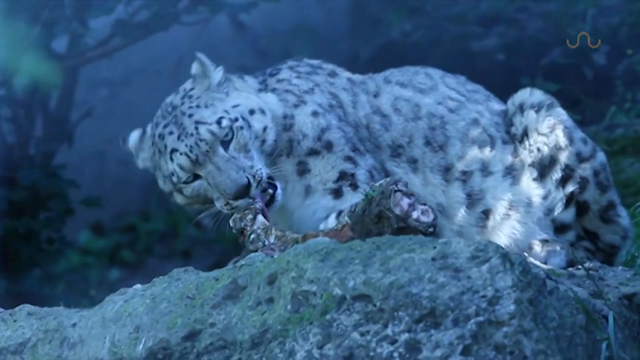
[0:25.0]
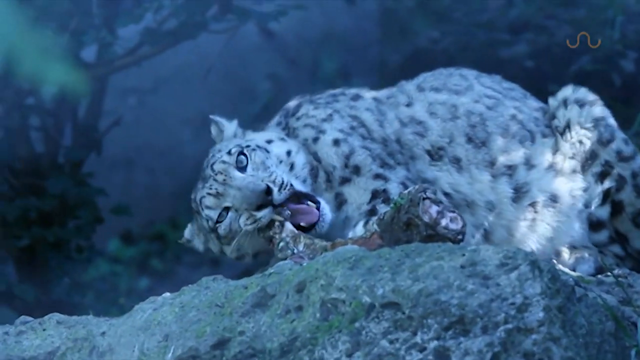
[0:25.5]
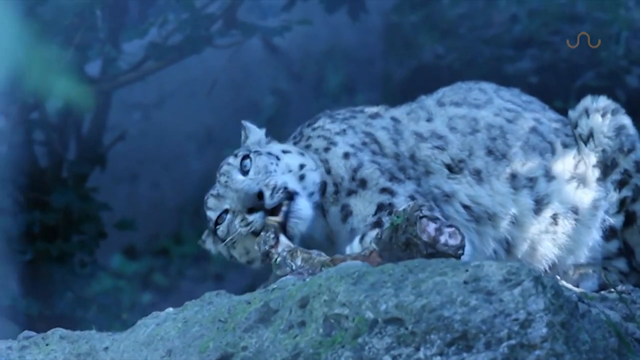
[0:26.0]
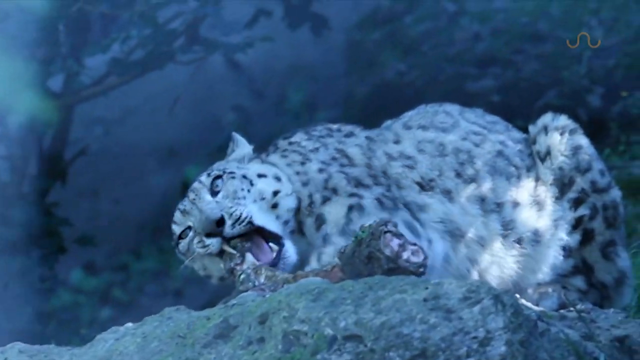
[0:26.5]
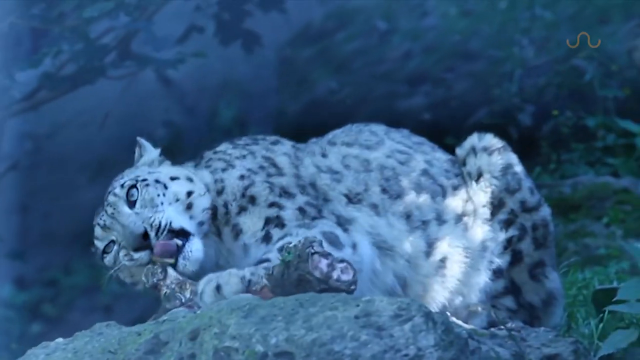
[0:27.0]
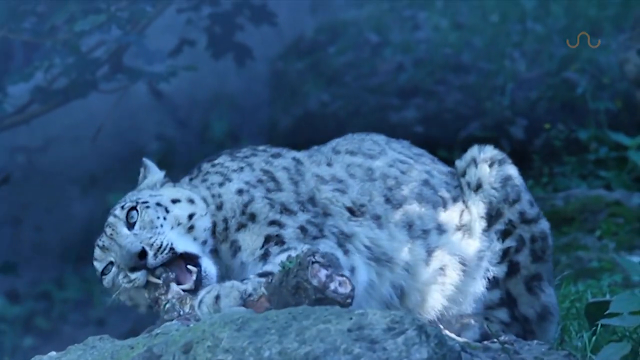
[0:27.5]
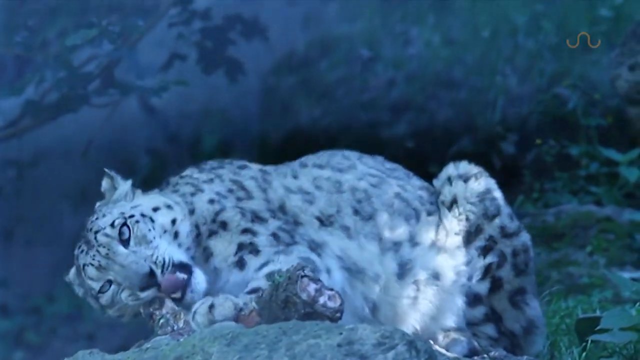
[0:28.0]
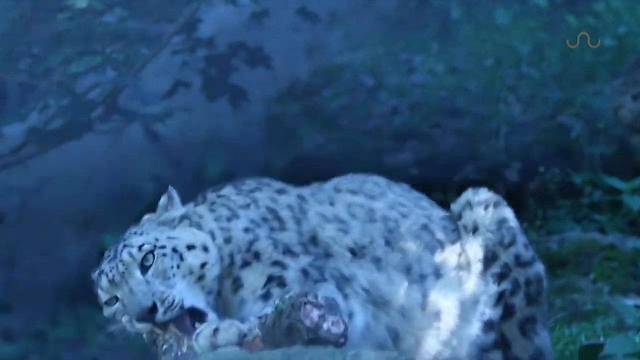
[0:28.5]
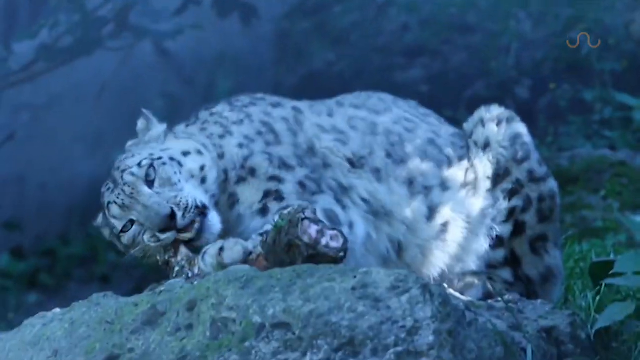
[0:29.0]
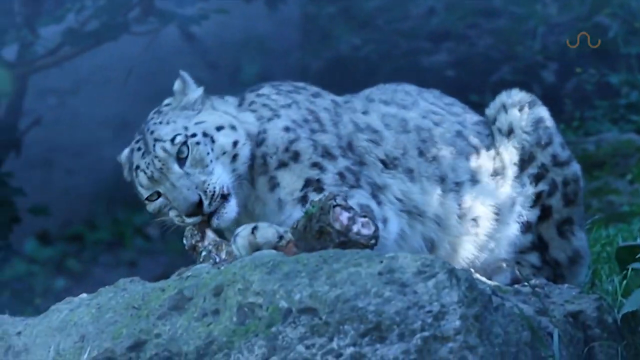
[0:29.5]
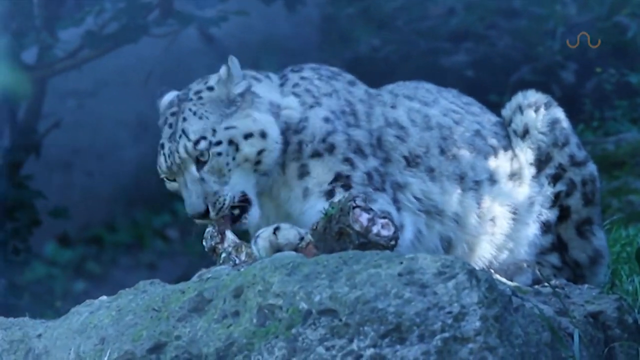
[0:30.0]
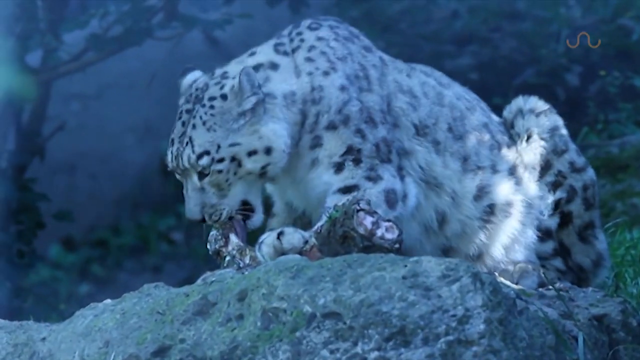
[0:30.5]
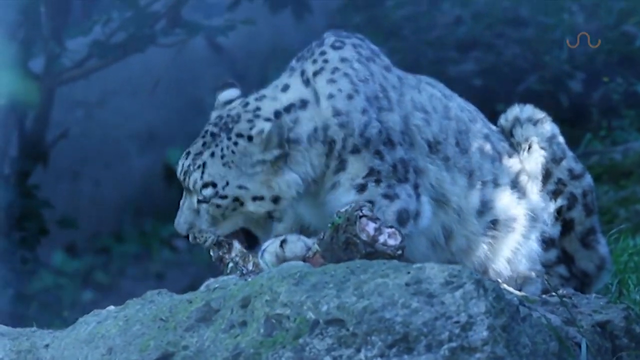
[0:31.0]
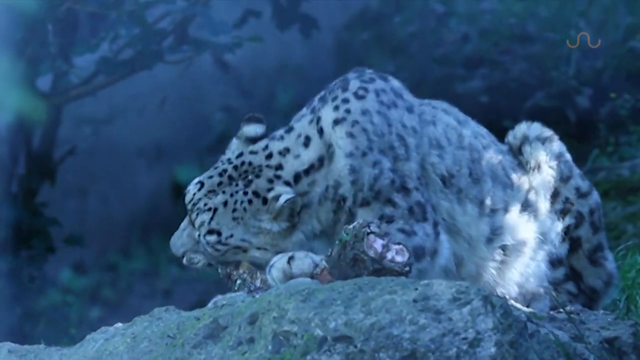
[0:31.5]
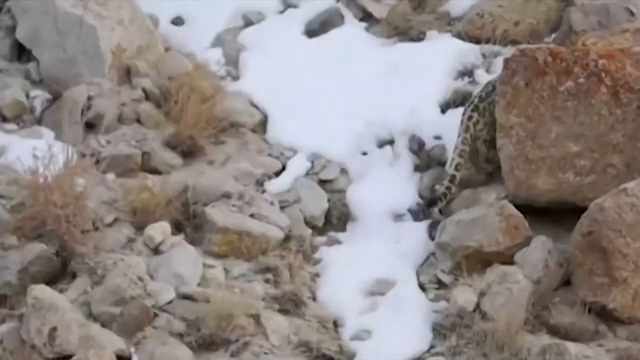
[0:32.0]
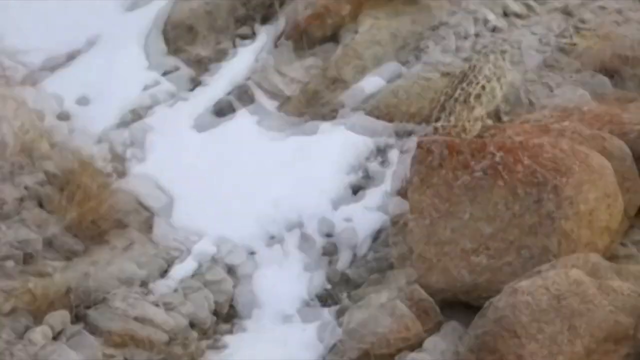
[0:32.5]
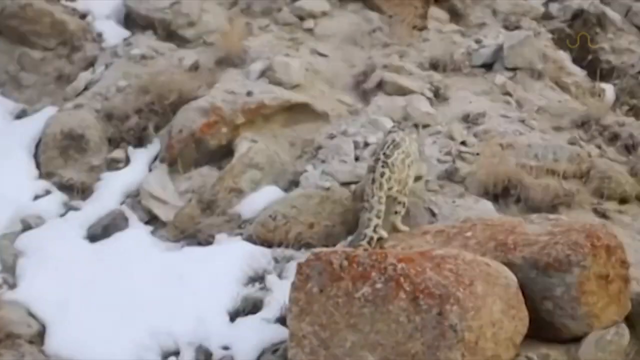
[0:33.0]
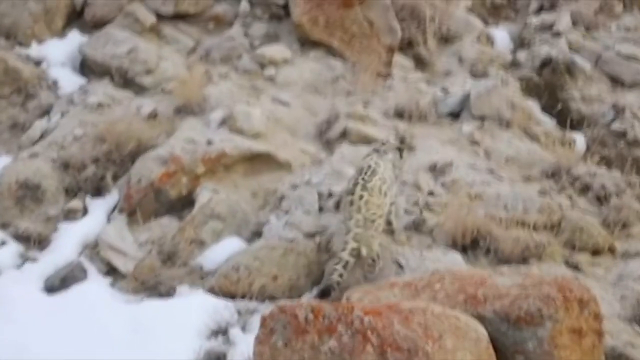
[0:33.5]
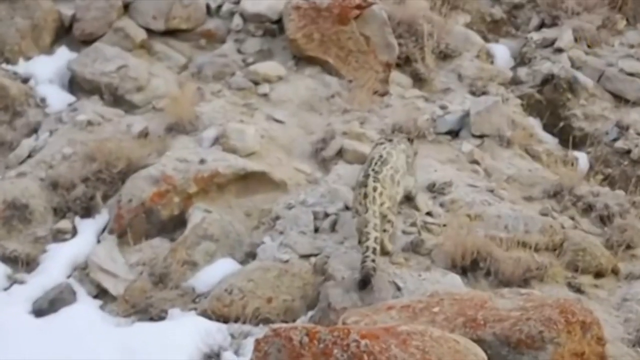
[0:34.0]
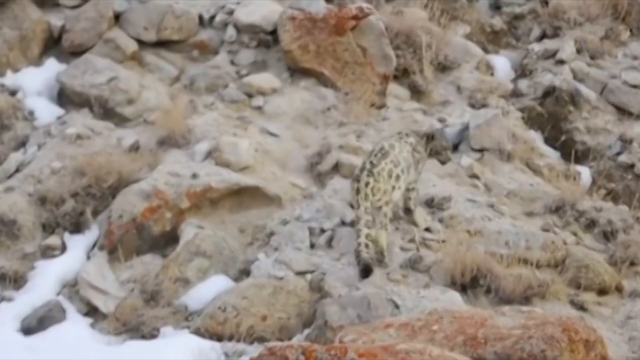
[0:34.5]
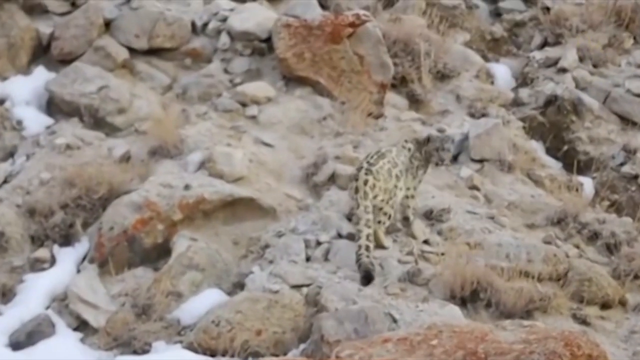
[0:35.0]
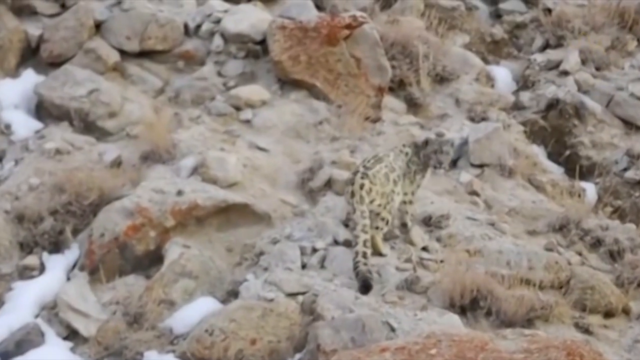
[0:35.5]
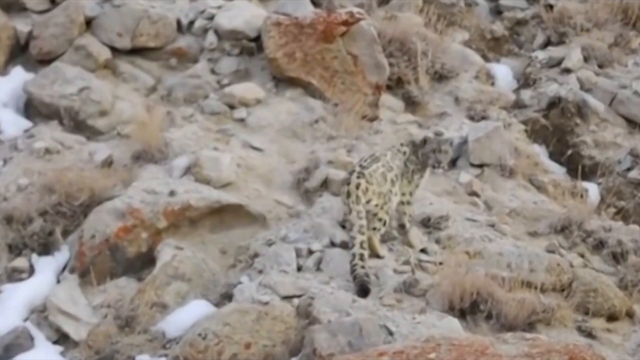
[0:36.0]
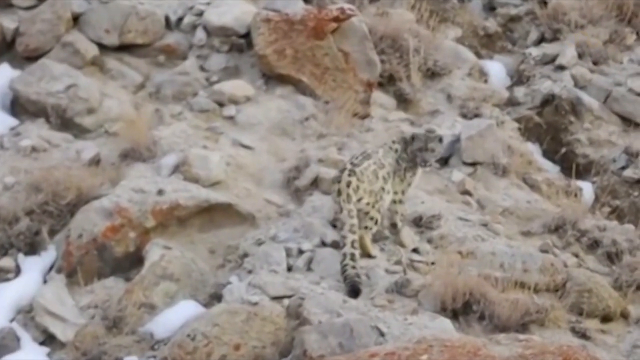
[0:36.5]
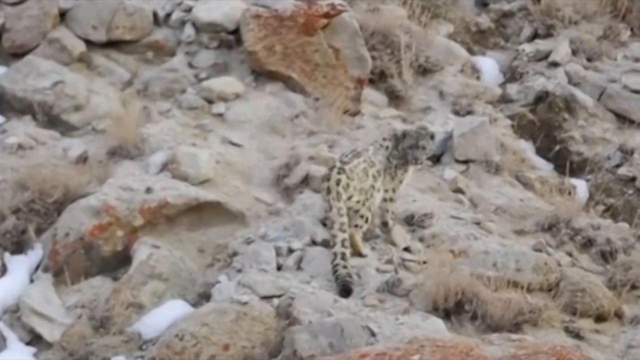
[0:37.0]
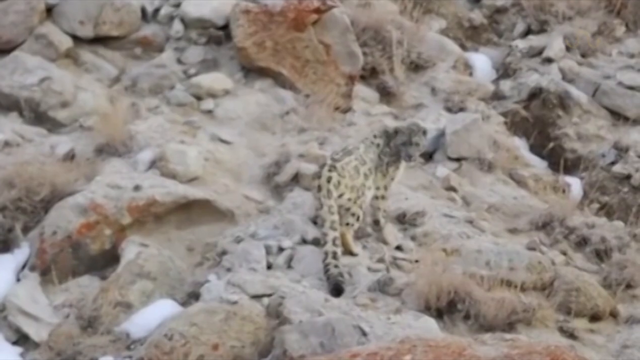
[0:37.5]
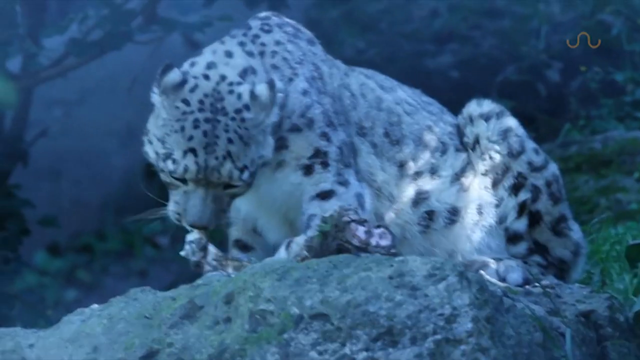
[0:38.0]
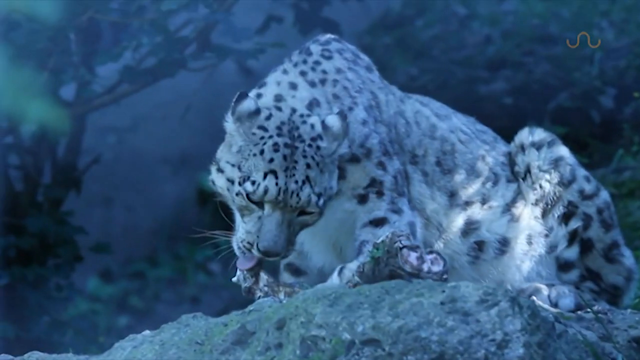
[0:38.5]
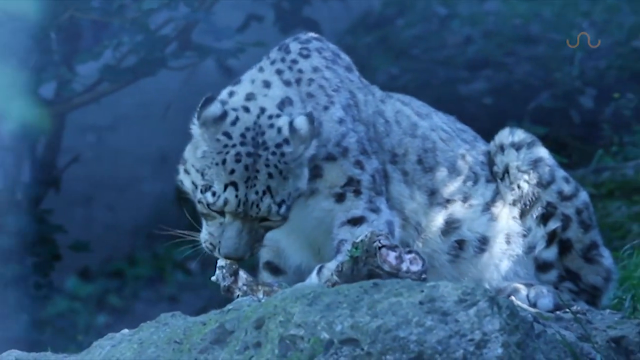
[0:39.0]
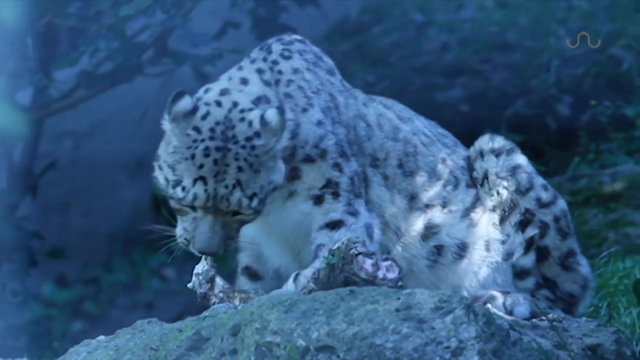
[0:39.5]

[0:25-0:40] A snow leopard eats something and then climbs again. The video cuts to another scene, possibly of another snow leopard, which is on a rock gnawing on a bone and seems to be really eating away at it. Another snow leopard is on rocks, climbing up the side of a mountain. Two snow leopards appear: one climbing the mountainside and one eating and chewing on the bone.